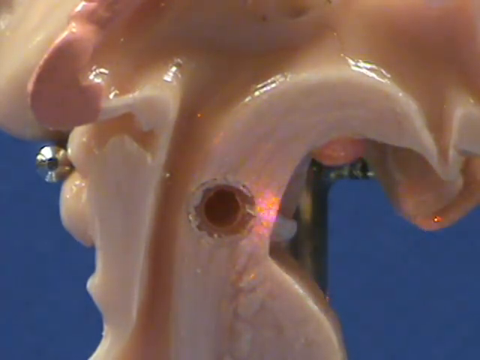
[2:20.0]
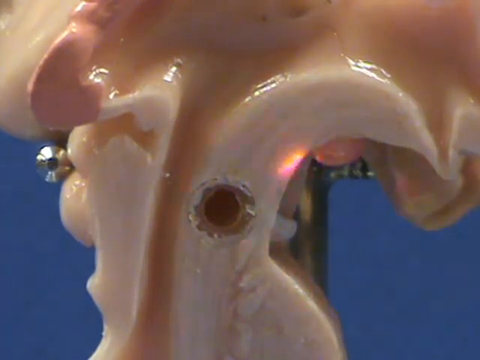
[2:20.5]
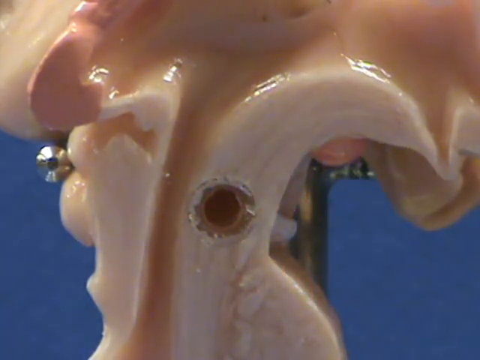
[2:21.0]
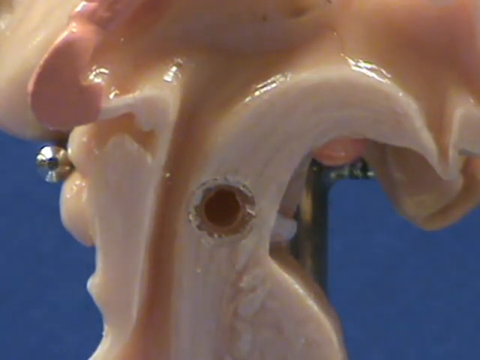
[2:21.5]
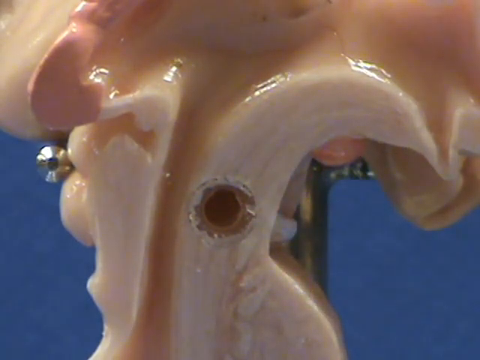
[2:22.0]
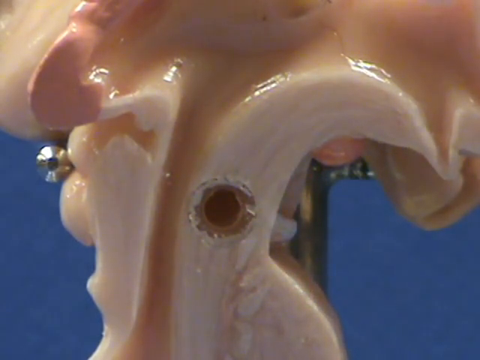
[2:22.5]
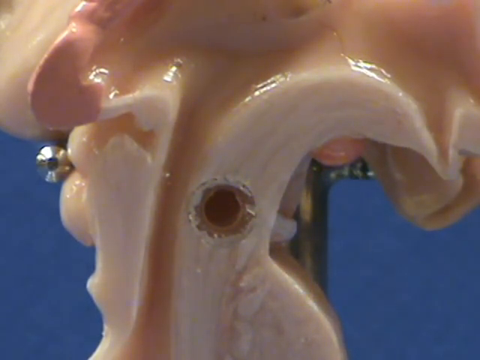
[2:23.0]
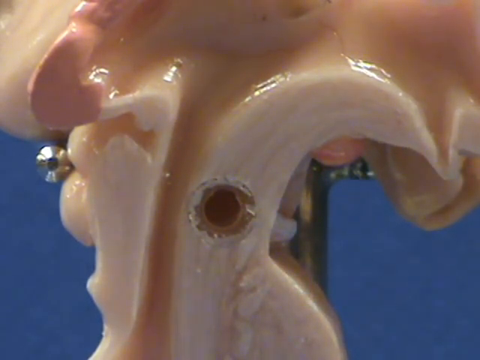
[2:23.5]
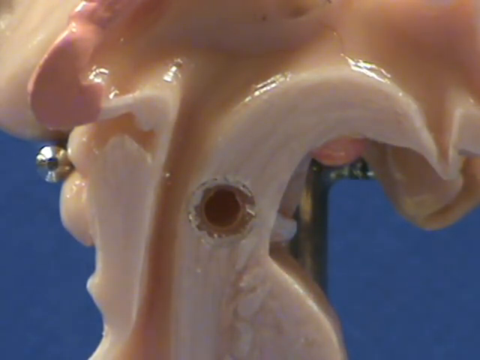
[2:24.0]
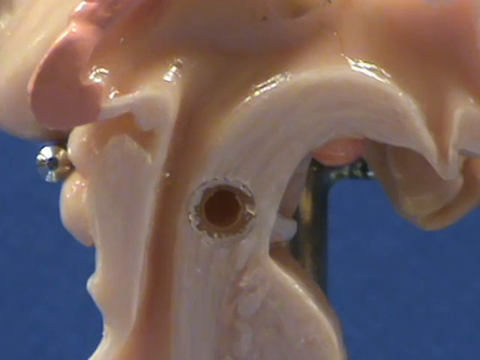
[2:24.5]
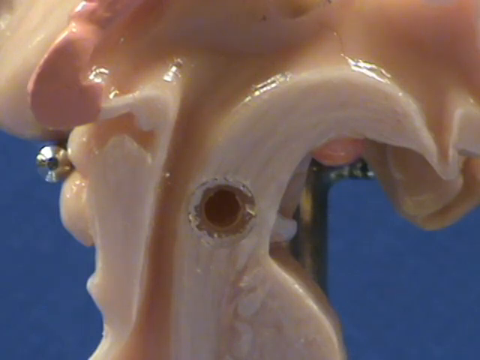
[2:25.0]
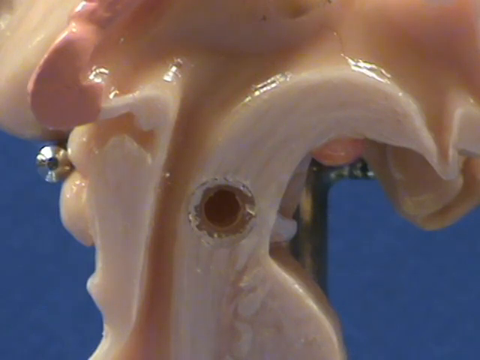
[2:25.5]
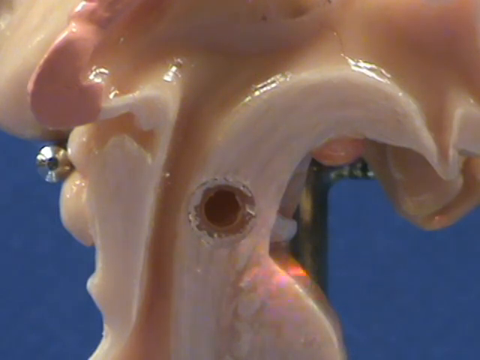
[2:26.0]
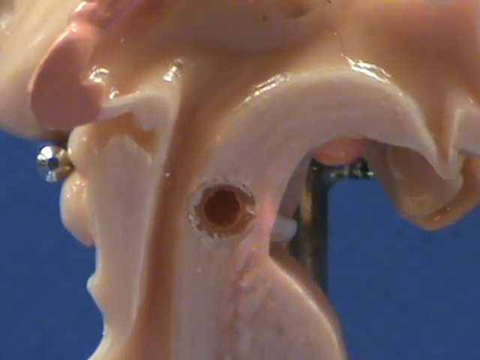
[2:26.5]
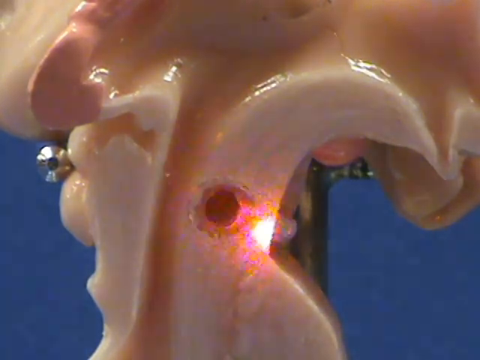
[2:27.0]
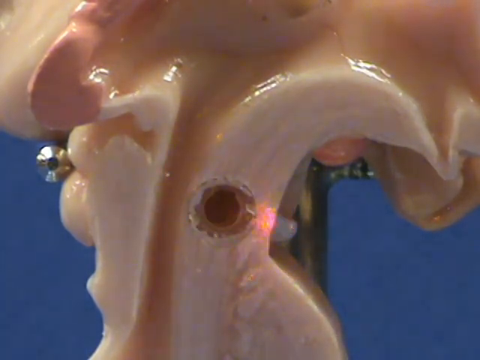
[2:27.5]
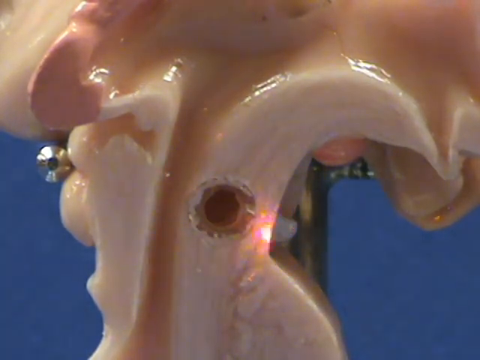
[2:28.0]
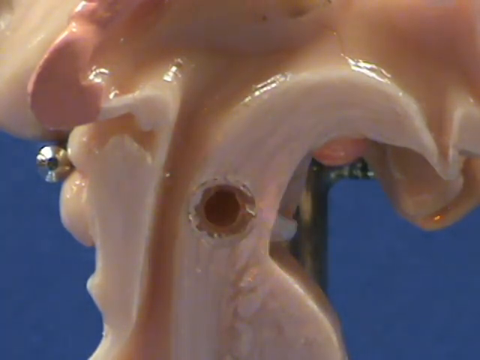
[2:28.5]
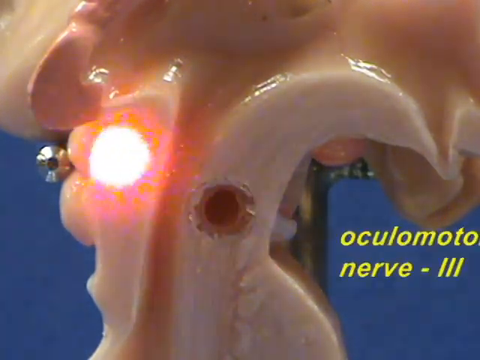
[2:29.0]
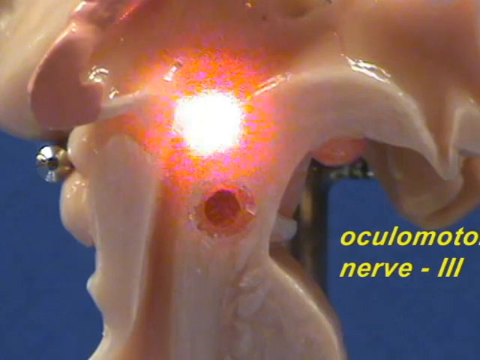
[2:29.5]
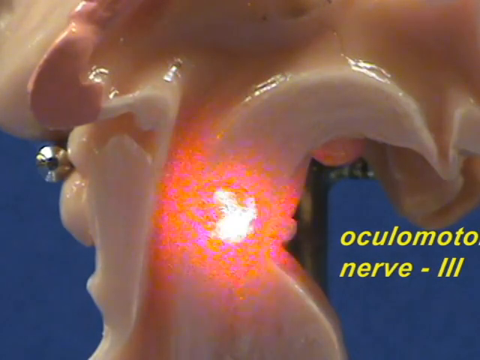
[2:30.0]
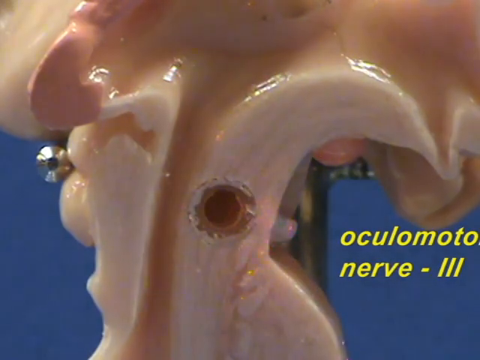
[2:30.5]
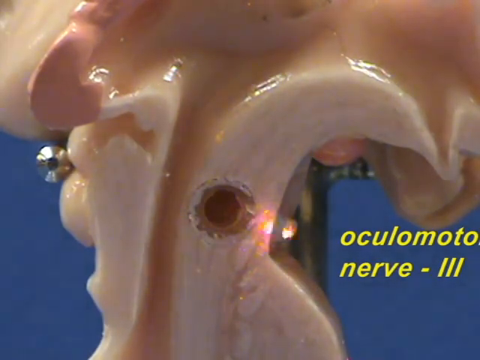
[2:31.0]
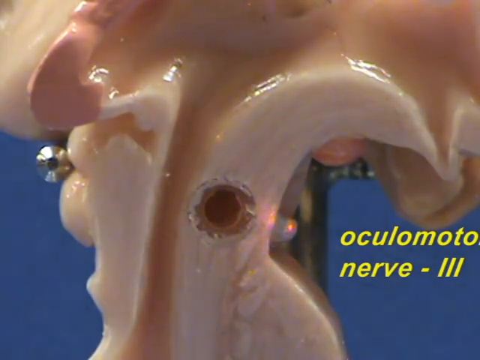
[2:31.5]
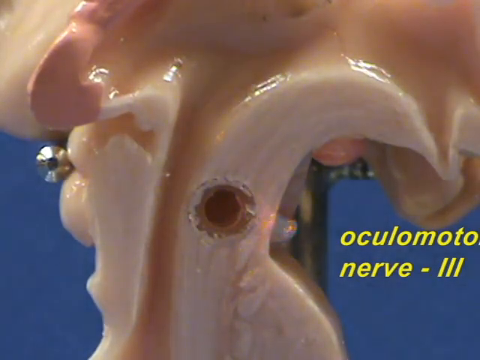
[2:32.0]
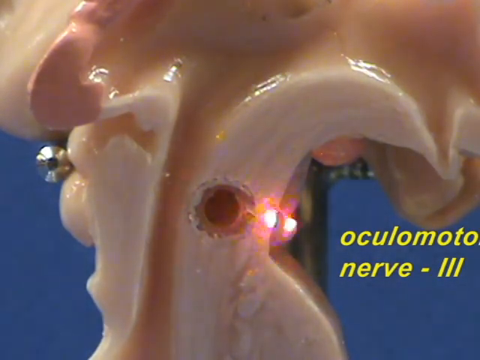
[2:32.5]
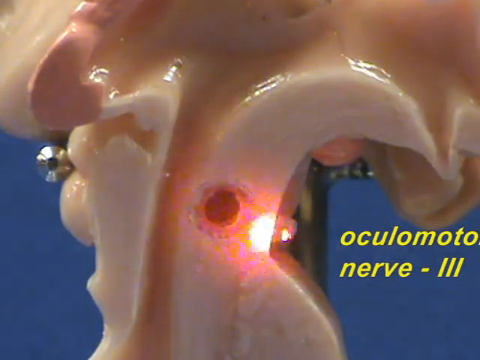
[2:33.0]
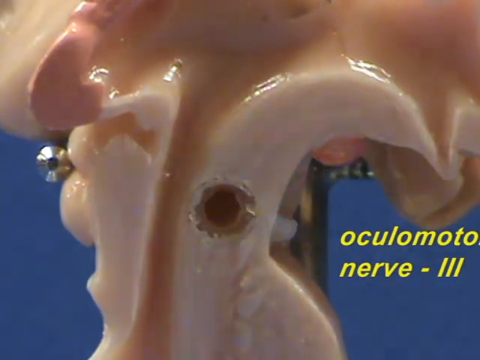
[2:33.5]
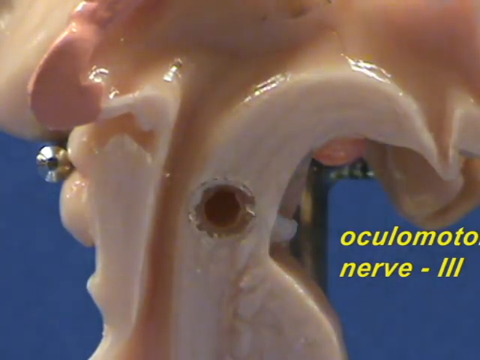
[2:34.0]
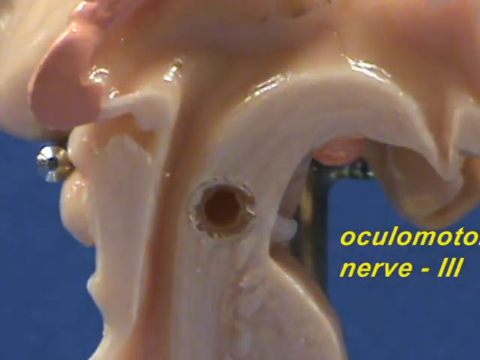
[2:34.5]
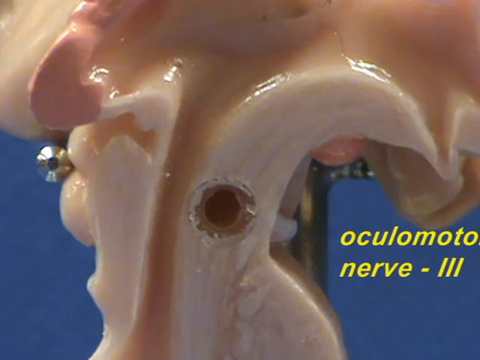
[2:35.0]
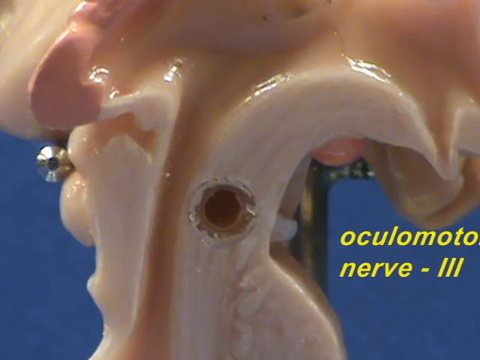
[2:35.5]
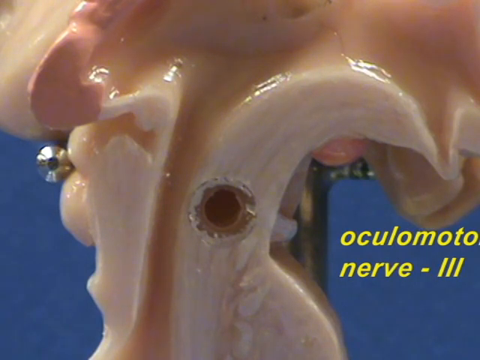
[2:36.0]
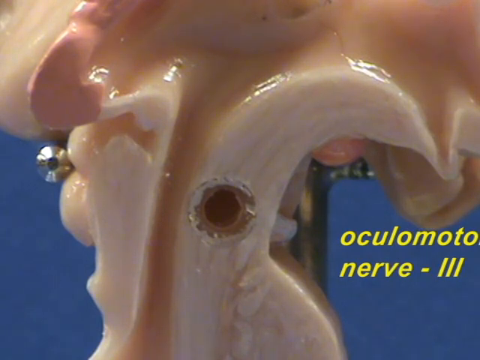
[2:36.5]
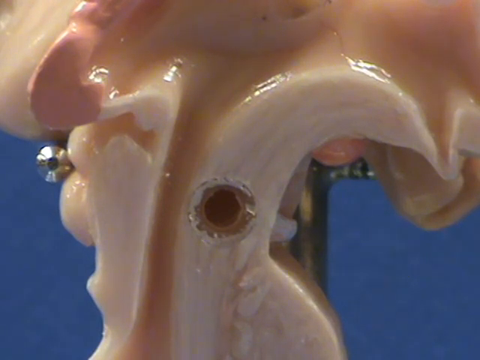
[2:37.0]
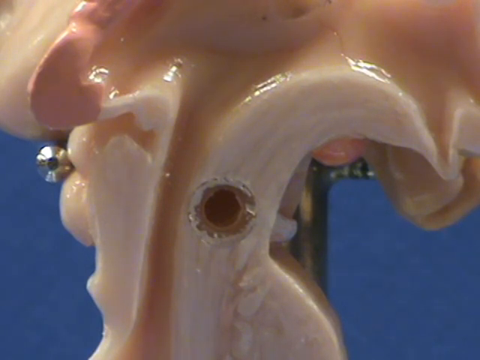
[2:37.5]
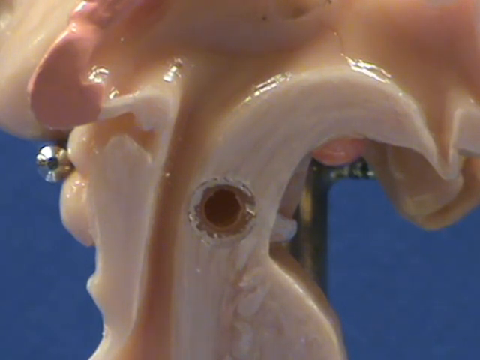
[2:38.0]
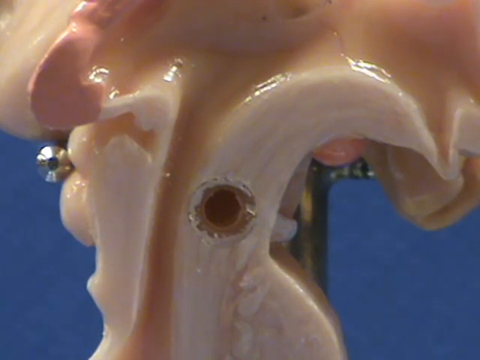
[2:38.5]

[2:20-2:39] Against the blue background, the view is zoomed in on the bottom part of the object resembling a part of the human body. Yellow text and a high-powered light are used to identify its parts: the words come up, go away, and then the light appears. In the very bottom right corner, "oculomotor nerve - III" pops up, with the three in Roman numerals. The light points to a small spot, almost on the side, and seems to focus on a little nodule sticking out that is whiter than the rest of the object. The video then ends.